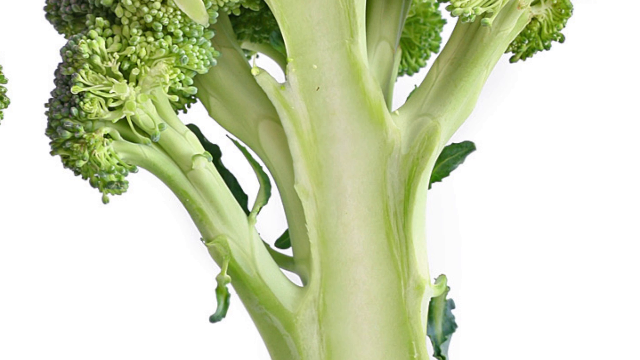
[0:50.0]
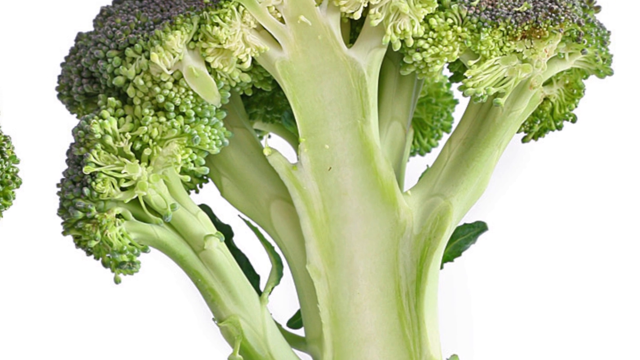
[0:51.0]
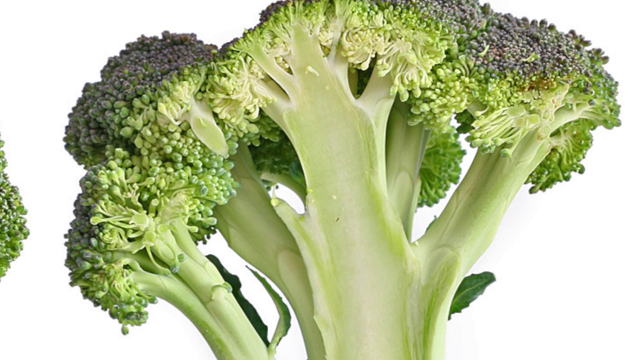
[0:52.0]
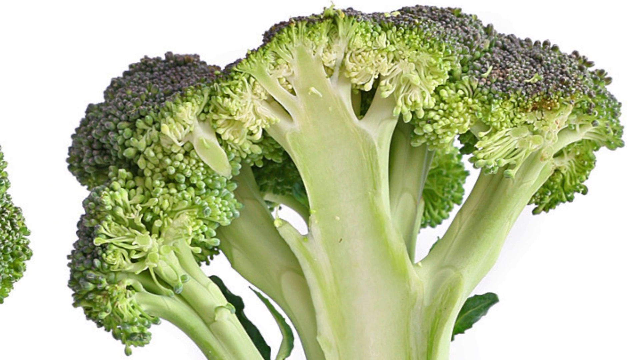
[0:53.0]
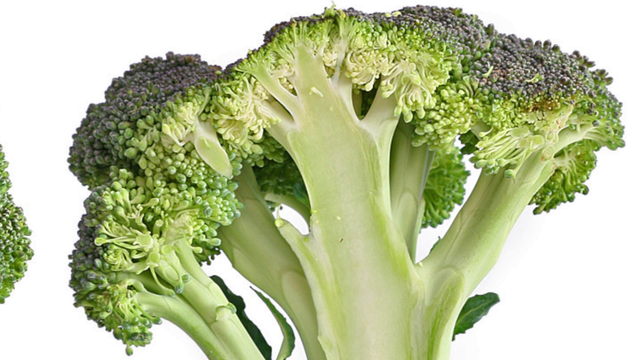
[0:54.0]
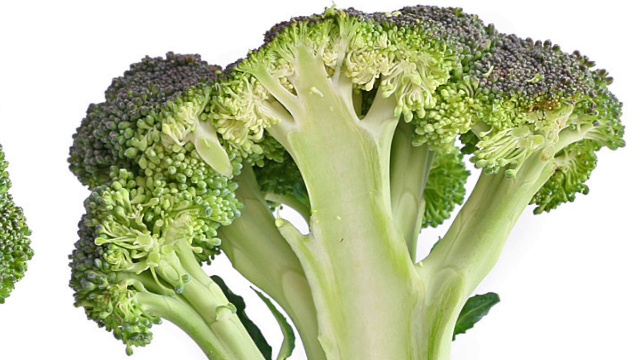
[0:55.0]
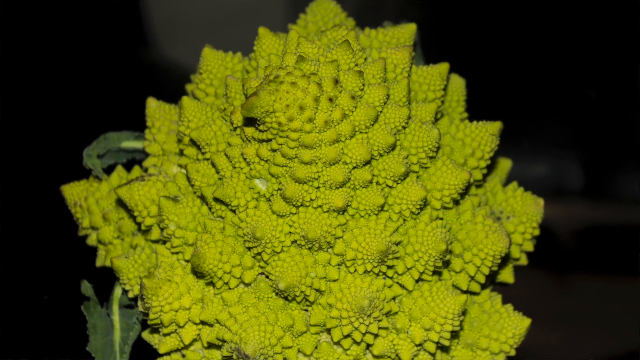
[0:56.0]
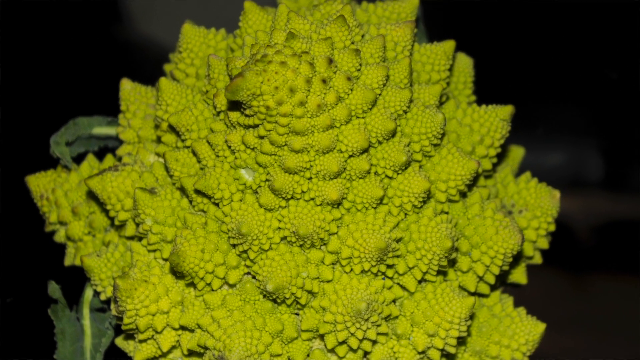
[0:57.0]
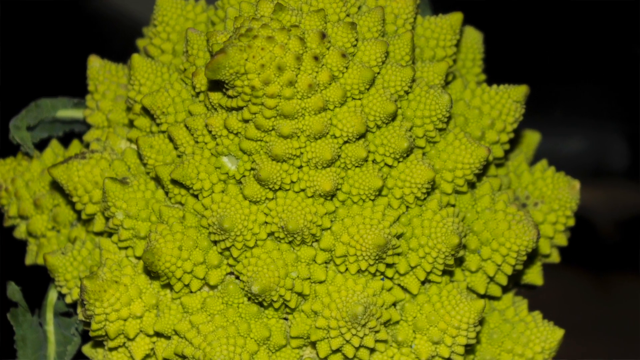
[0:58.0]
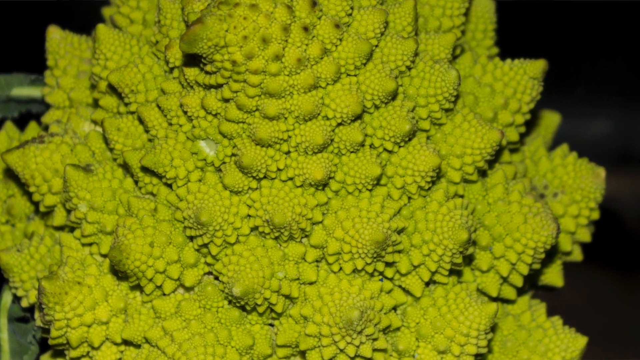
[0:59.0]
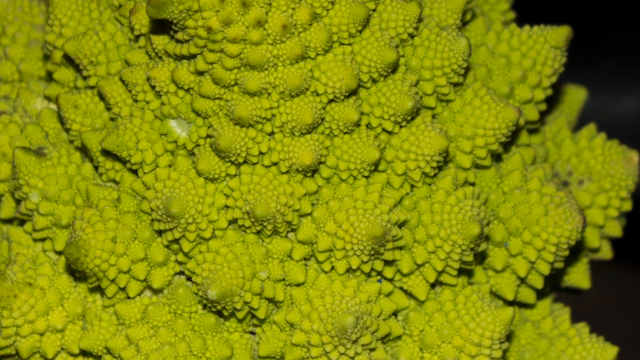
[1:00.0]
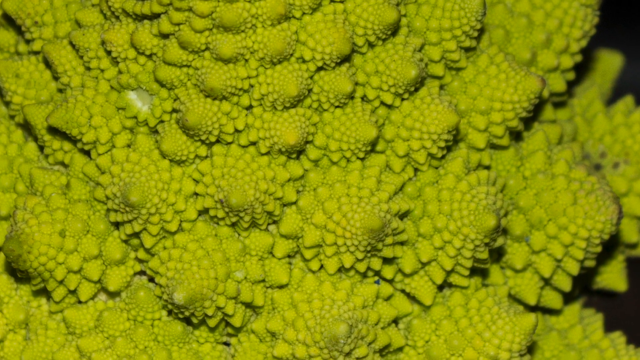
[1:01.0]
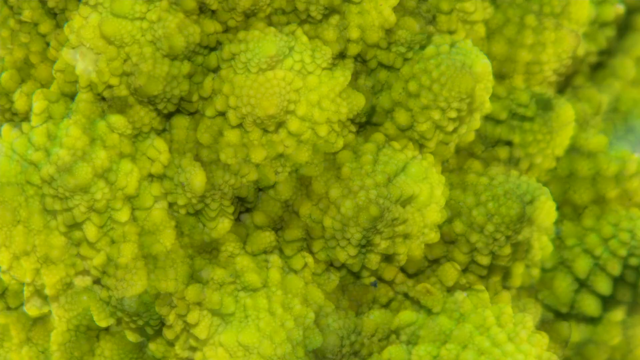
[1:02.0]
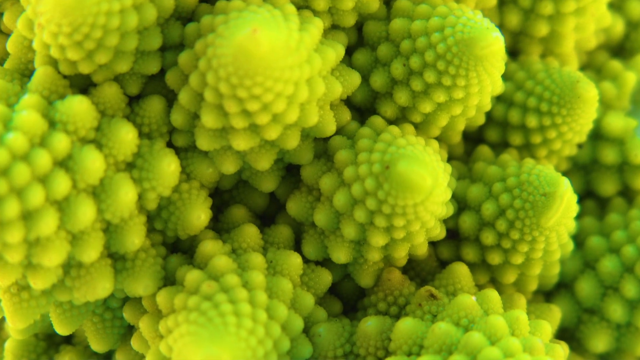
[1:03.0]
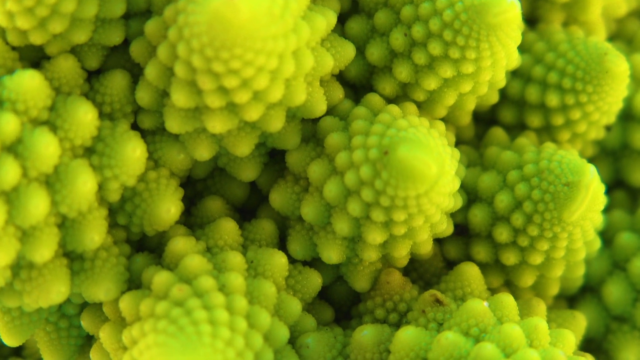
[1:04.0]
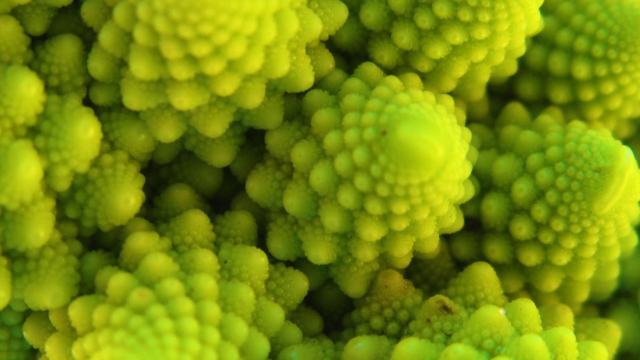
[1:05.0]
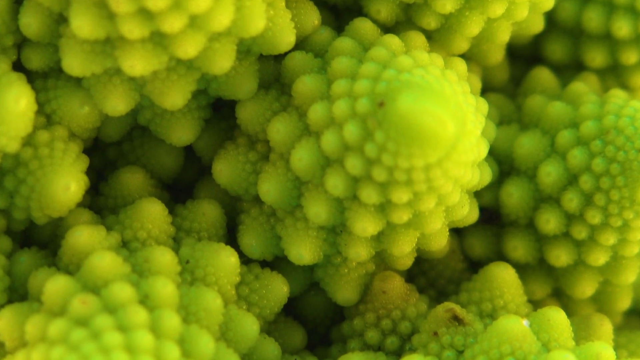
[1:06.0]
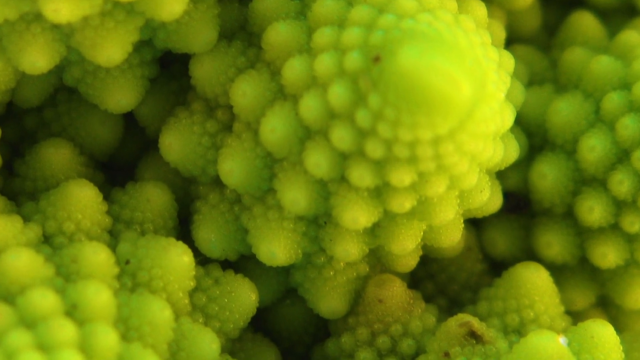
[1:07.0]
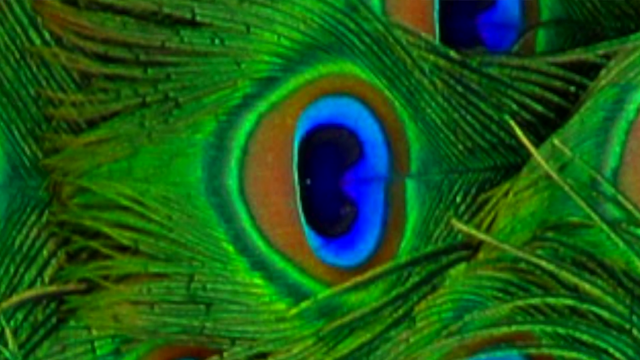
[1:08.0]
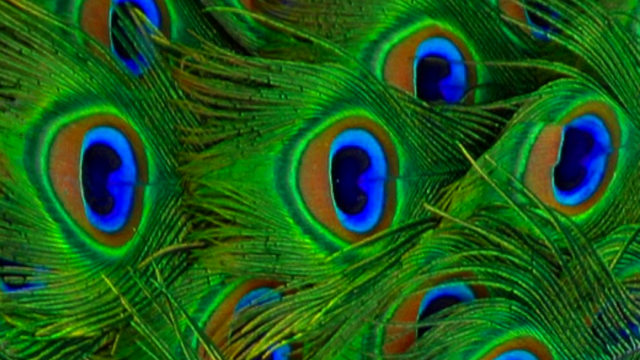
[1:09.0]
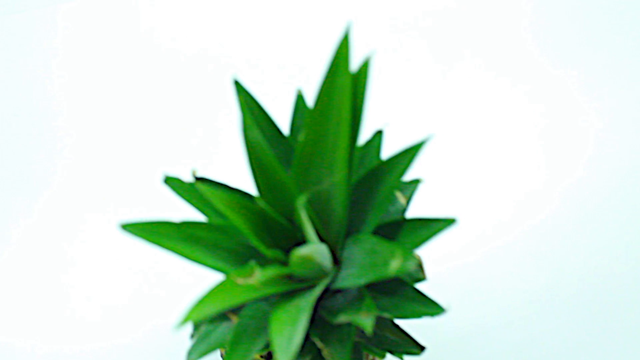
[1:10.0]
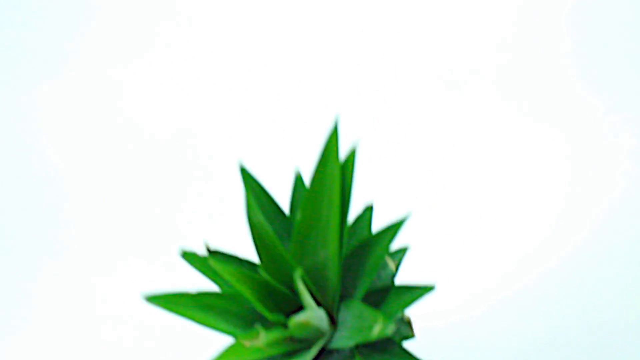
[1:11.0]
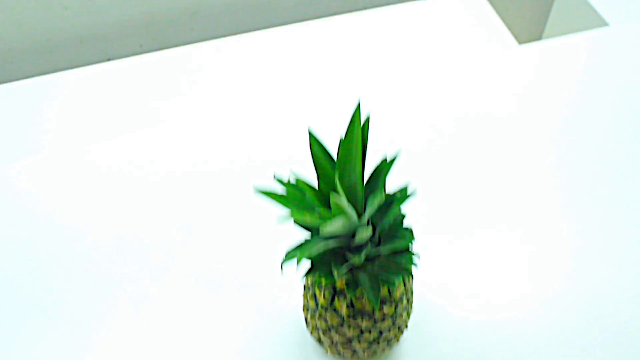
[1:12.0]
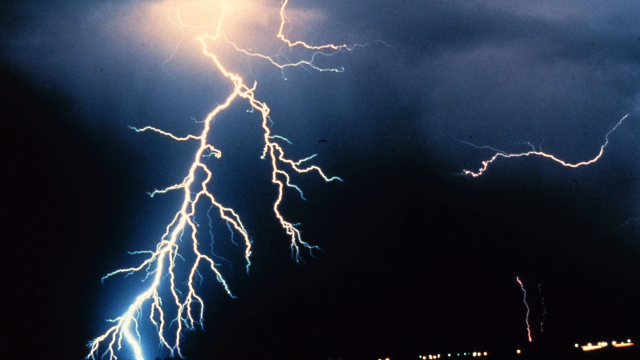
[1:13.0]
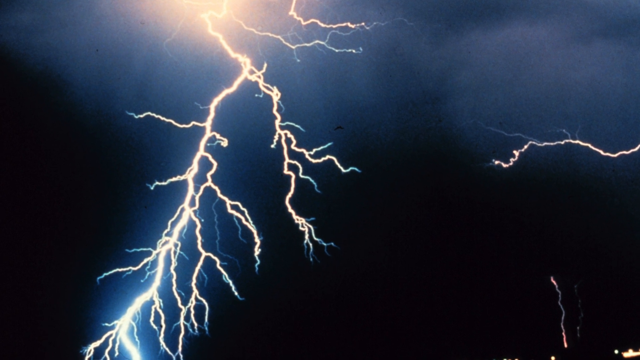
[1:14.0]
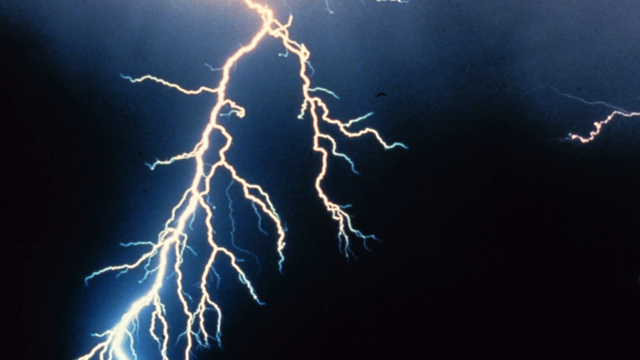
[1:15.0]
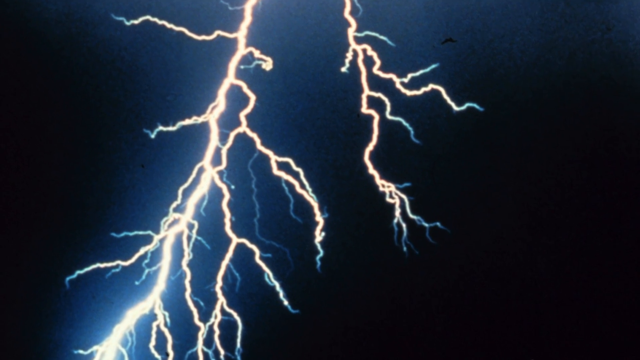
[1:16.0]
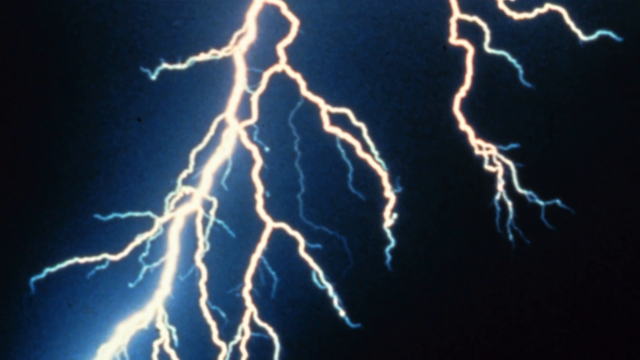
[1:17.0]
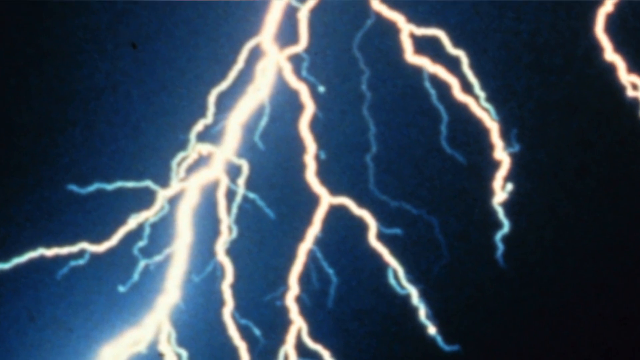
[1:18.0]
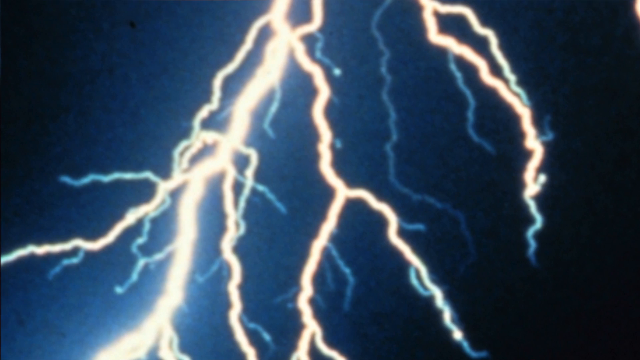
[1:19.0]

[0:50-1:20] The visuals have toppings of black and green. The broccoli has a green look with looping bubbles, and when the view zooms in, a pineapple is also part of the scene.